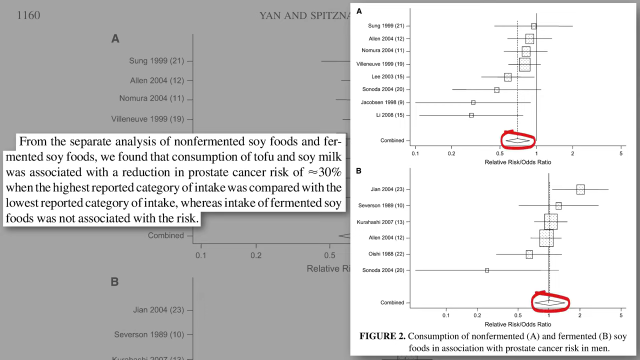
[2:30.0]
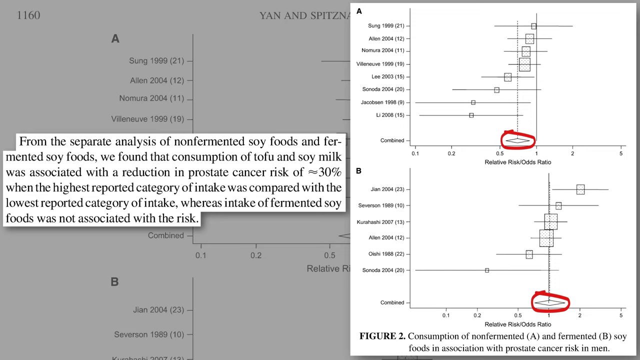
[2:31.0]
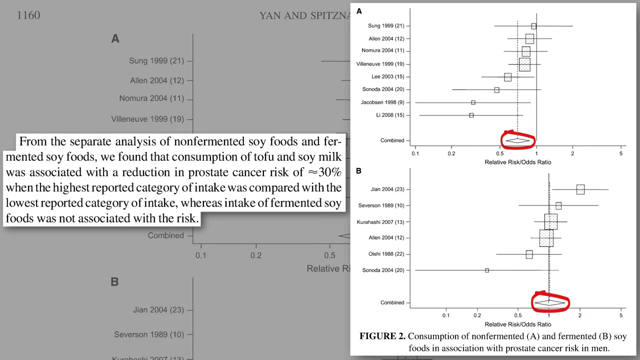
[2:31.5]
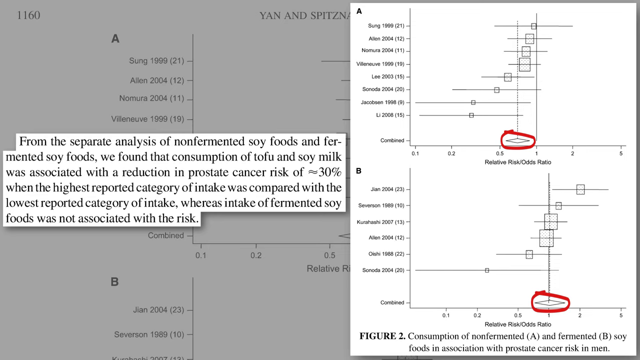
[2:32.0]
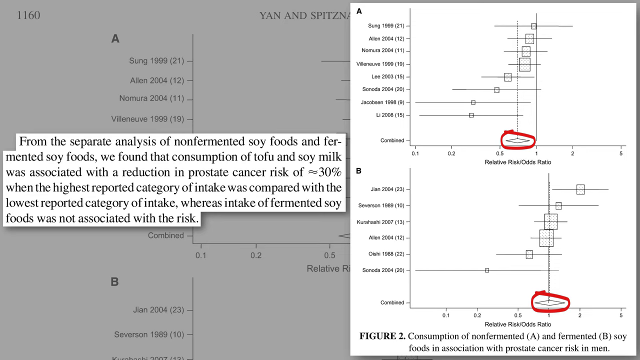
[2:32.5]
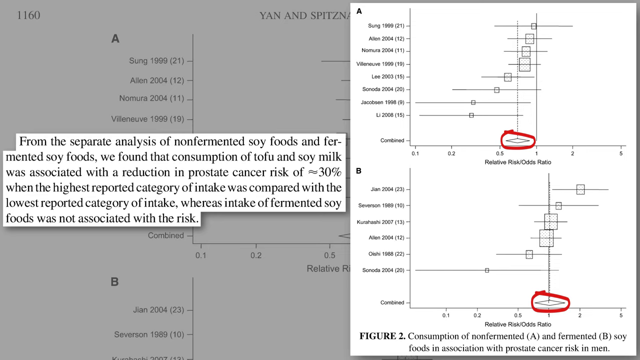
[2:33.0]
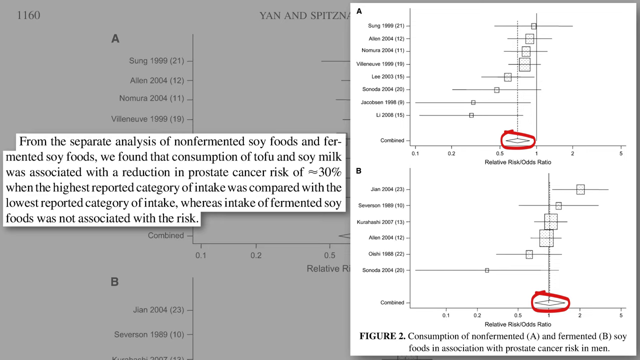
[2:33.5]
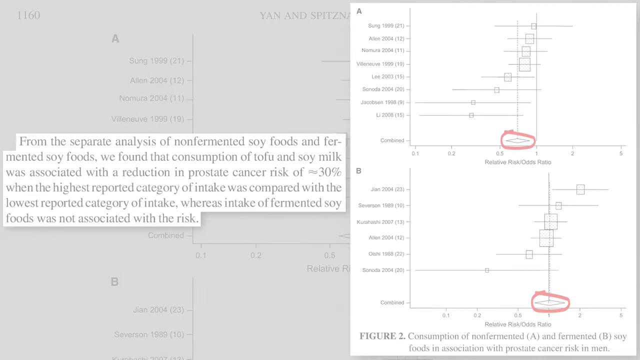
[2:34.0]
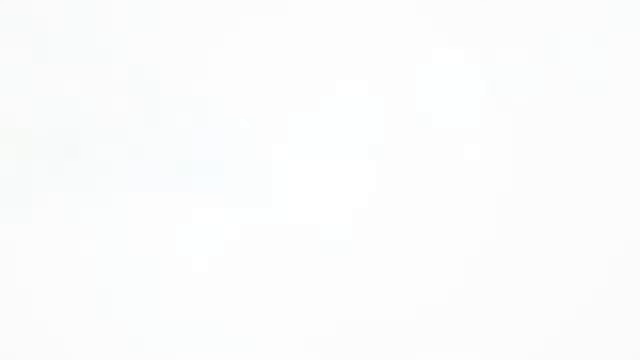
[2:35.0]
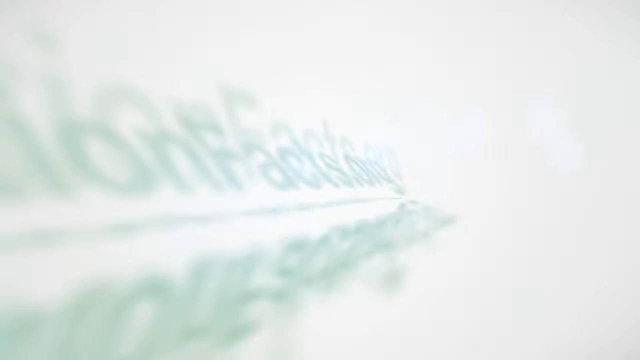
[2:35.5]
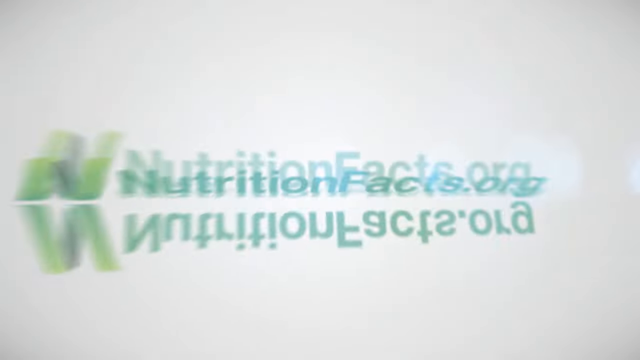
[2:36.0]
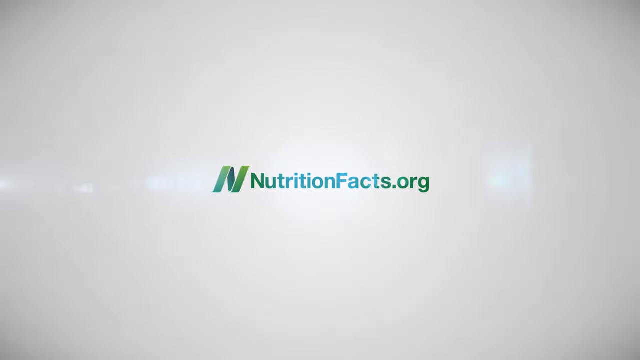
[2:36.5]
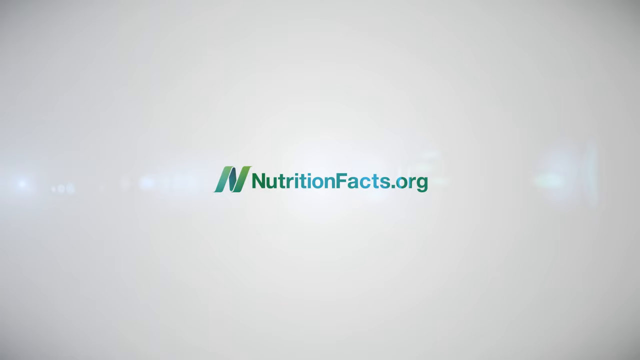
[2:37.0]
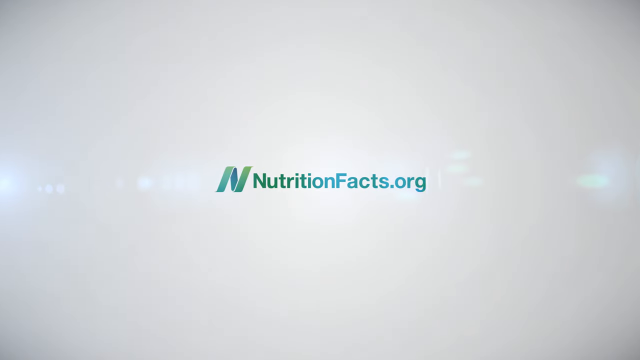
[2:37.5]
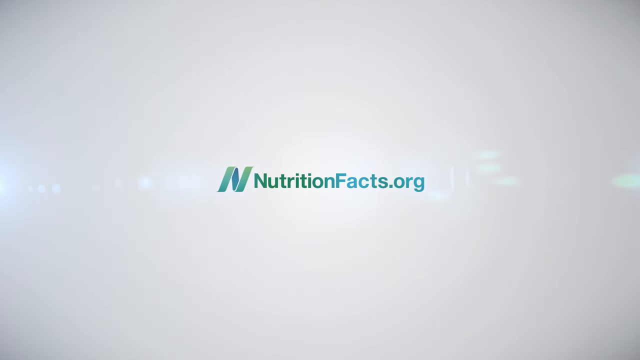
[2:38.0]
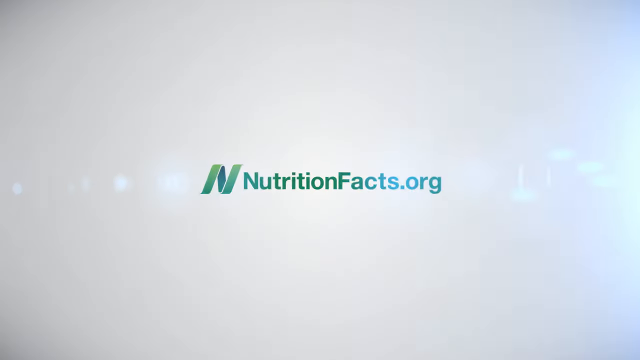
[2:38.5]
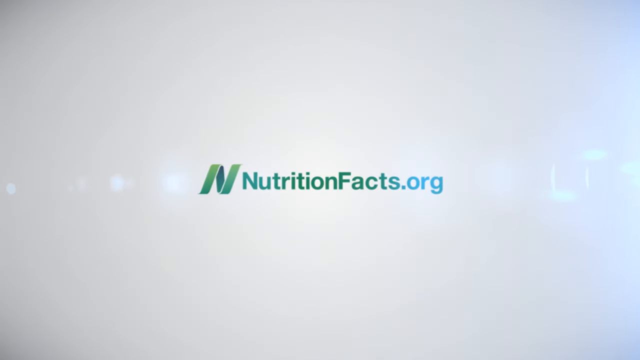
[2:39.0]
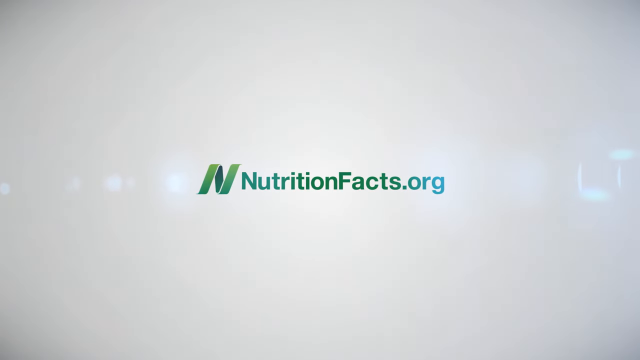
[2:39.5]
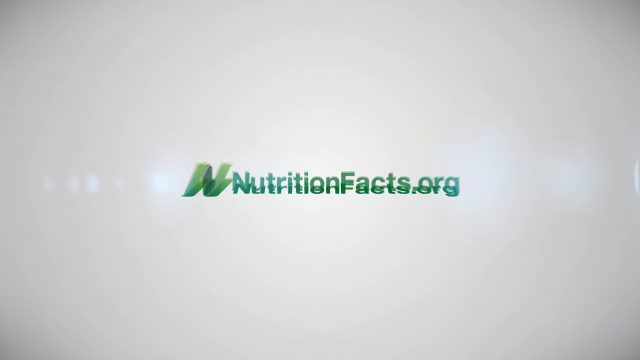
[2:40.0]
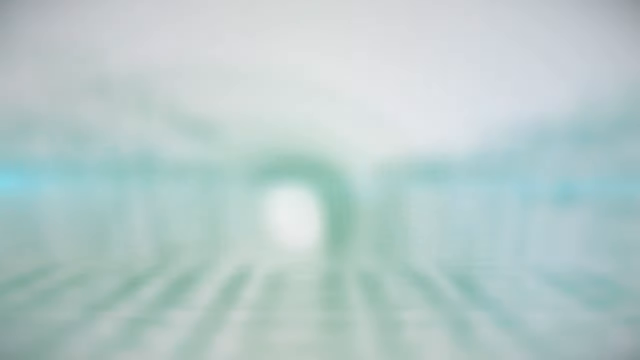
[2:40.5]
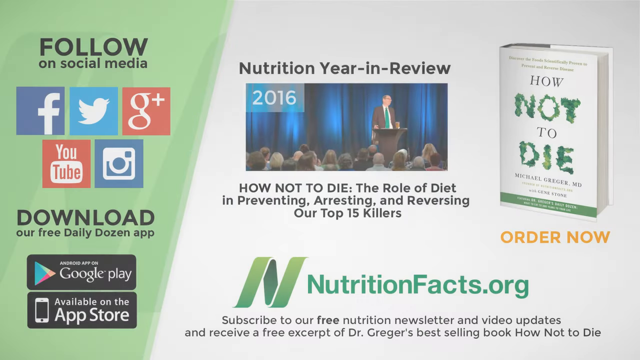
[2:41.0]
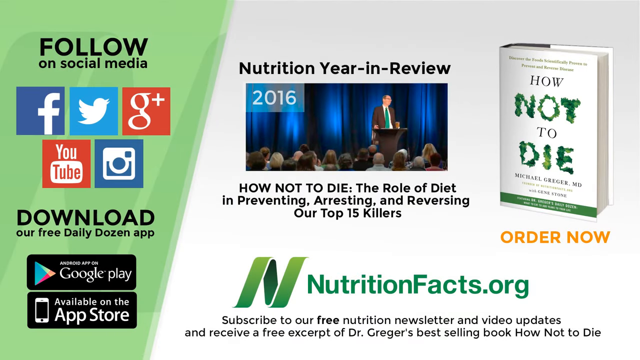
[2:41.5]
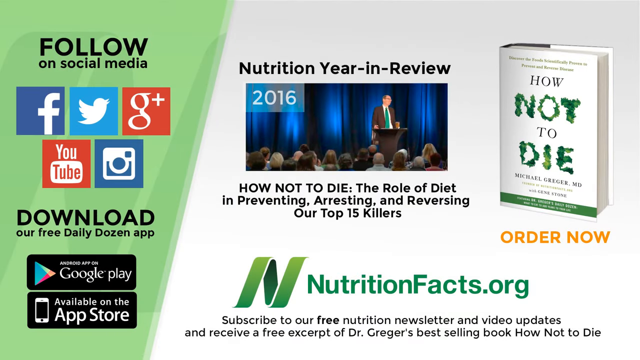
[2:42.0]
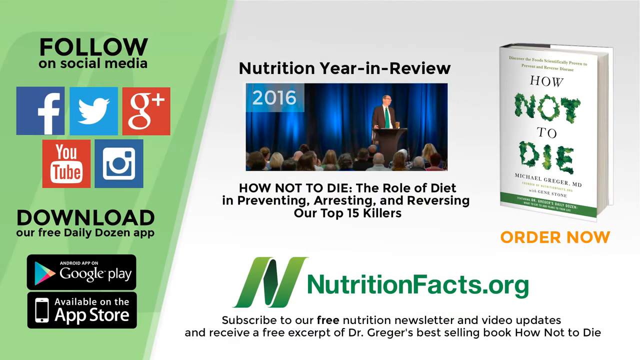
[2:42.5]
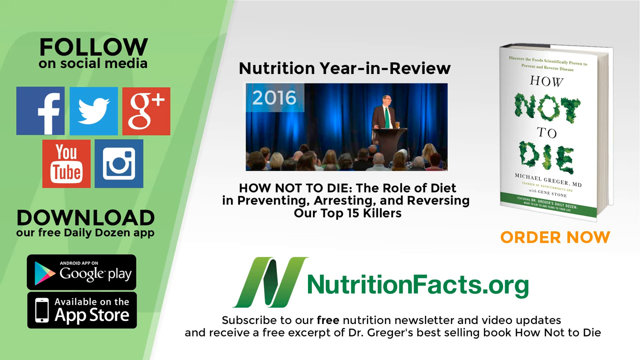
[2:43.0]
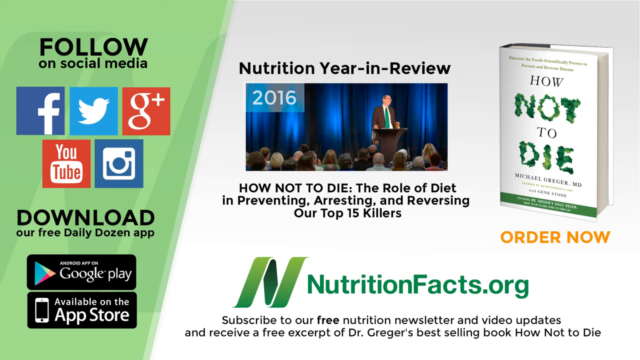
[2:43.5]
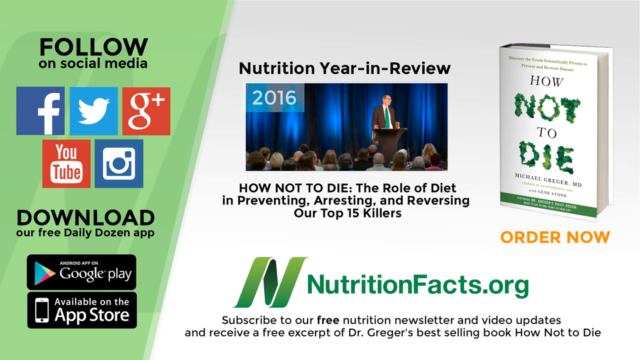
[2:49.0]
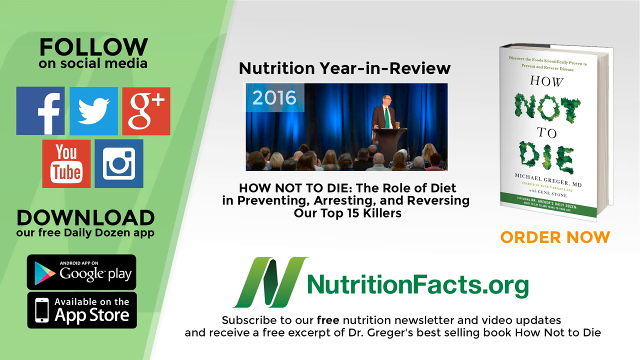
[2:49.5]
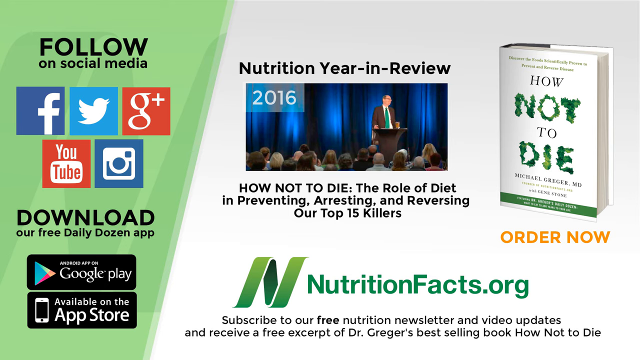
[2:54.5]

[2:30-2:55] On the graph labeled A and B, a symbol on graph A that looks like a triangle, between 0.5 and 1 on the x-axis, is circled in red. On graph B, the same symbol, like a triangle or a diamond shape, is also circled, right above 1 on the x-axis. The video fades to white and returns to the NutritionFacts.org screen from the beginning, with a logo of a slanted green N next to "Nutrition Facts" on the left side, on a white background. After a fade effect, a scene invites viewers to follow NutritionFacts on social media: Facebook, Twitter, Google+, YouTube and Instagram. There are also download links for Google Play and the App Store, a video insert from 2016, "How not to die: the role of diet in preventing, arresting, and reversing our top 15 killers", and a book with the same title with "order now" under it. The video stays on this scene for a few seconds.